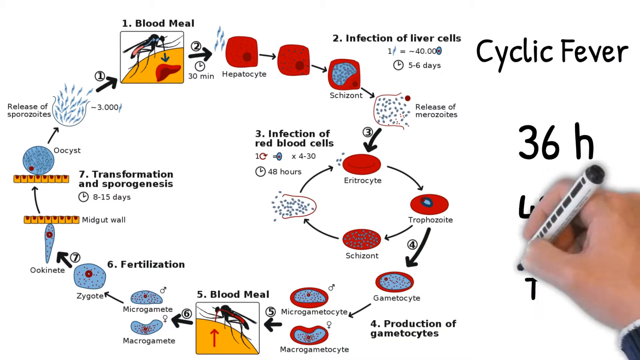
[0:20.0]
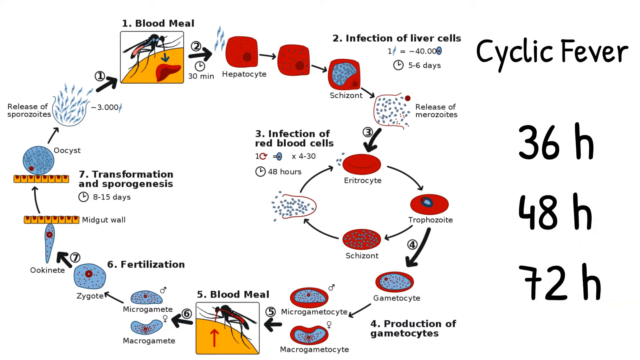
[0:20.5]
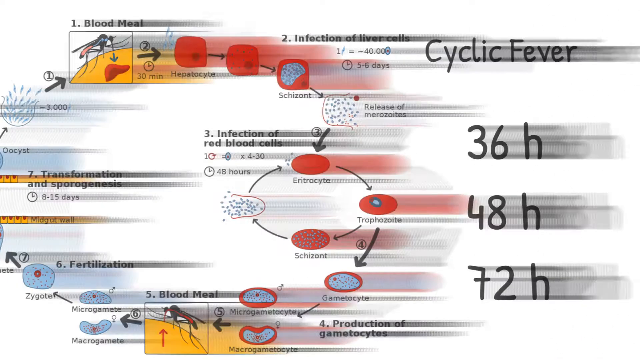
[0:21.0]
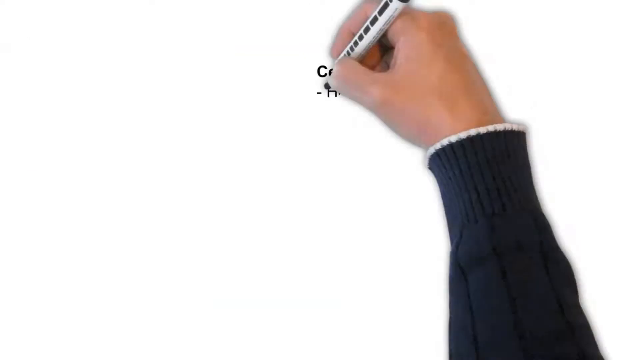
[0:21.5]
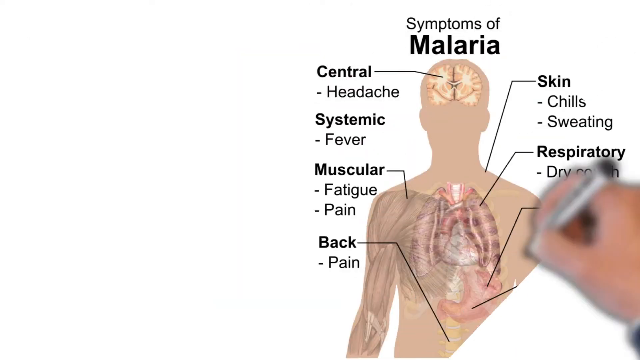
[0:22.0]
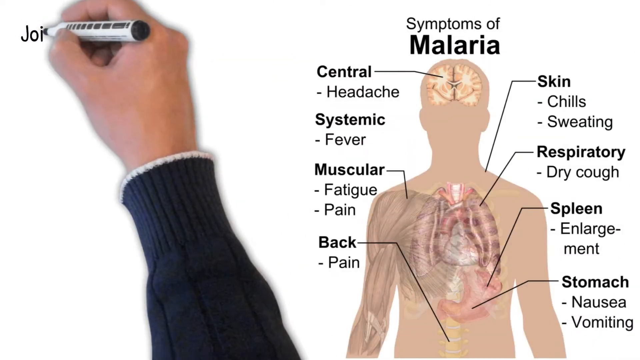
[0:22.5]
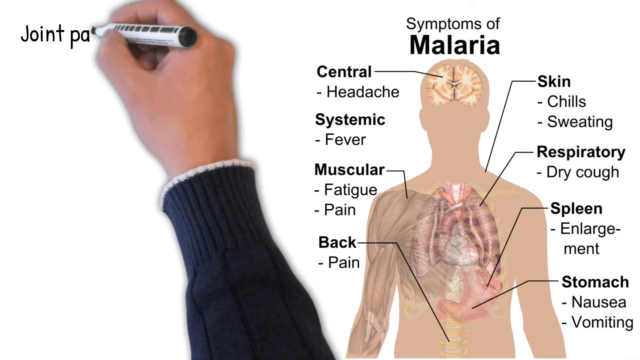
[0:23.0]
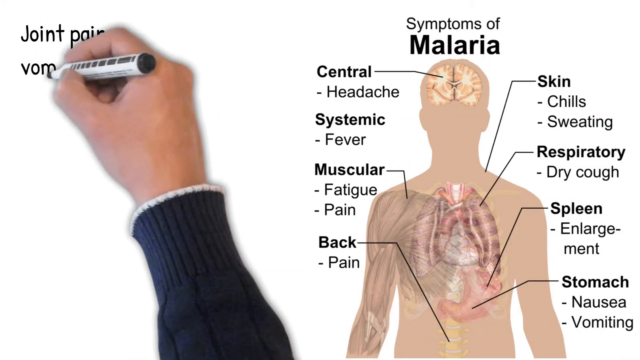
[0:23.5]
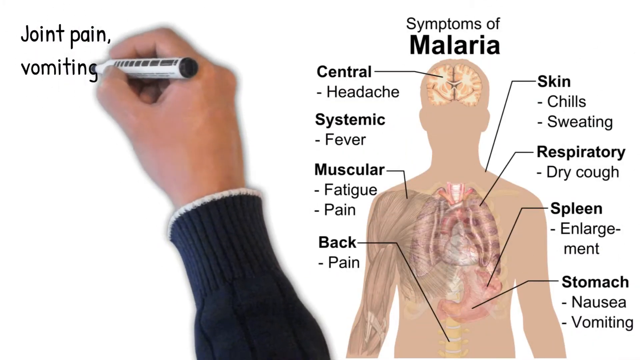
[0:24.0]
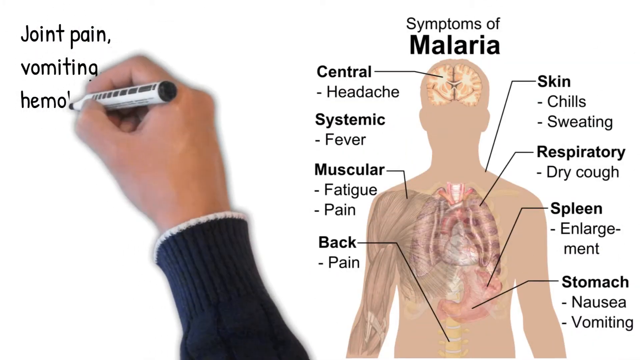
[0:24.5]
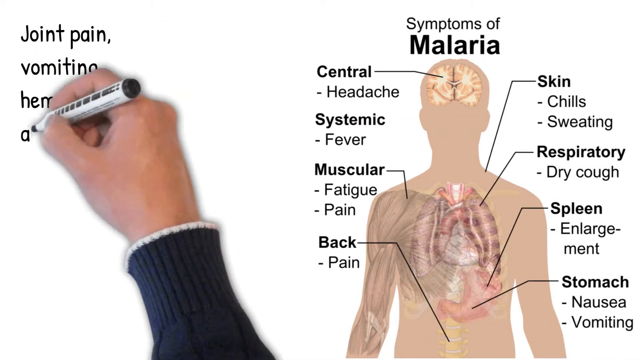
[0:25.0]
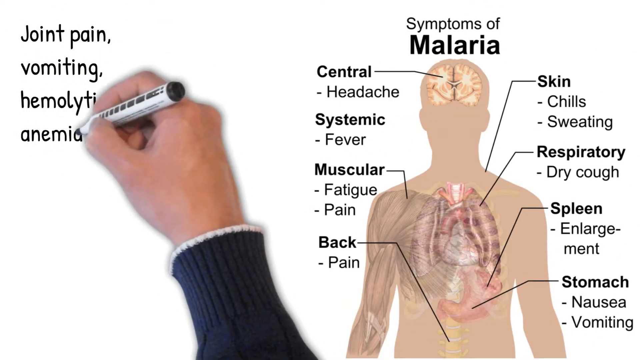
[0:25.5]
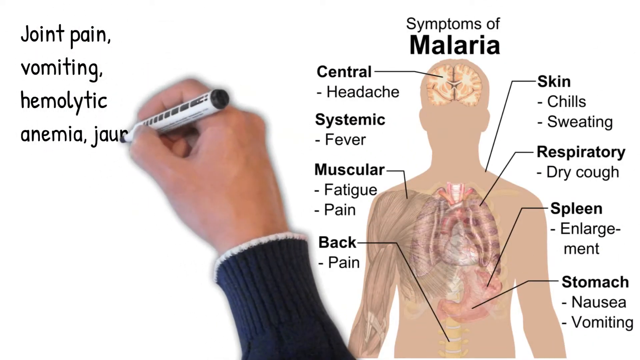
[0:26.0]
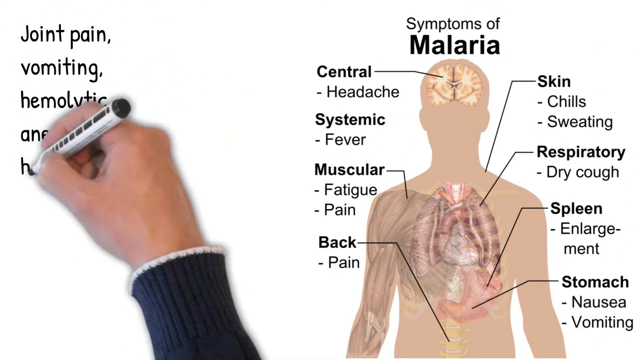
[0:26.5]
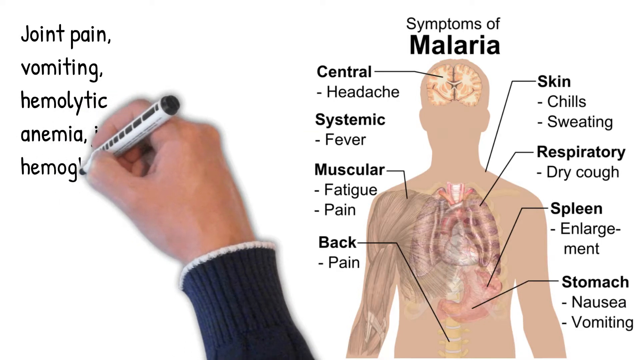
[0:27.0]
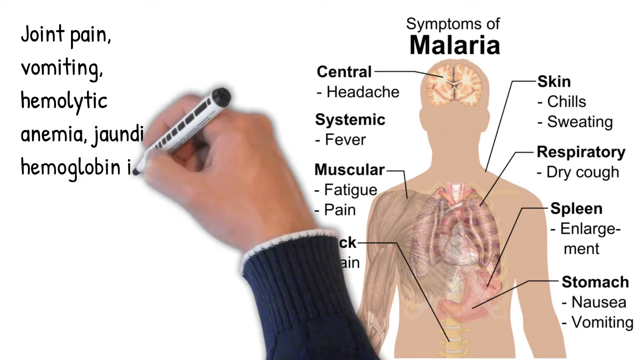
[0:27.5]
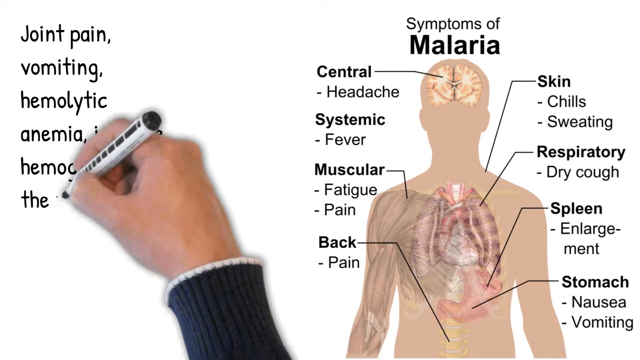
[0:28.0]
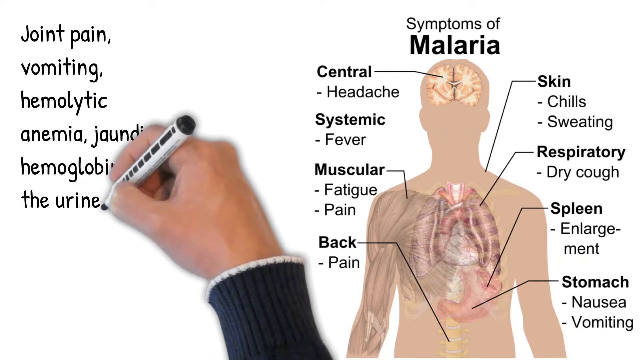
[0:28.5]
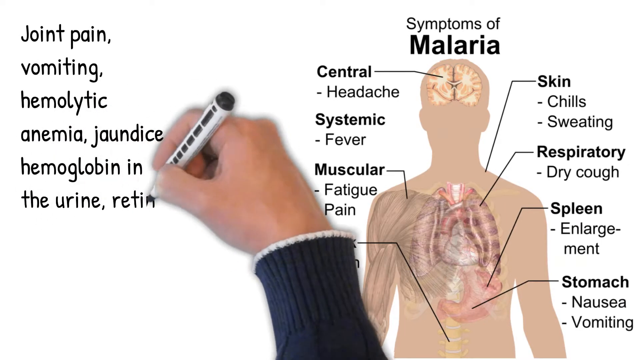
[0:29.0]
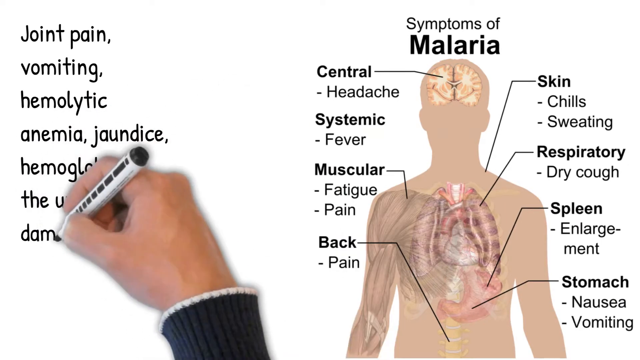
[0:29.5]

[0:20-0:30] The screen shows the start of a whiteboard, with a hand holding a marker pen animated to look as though it is drawing the contents. On the left there is what looks like a life cycle, drawn as a cycle of different images with numbered points: point 1 is "blood meal", and it goes all the way around to number 5, which is also "blood meal". Text on the right reads "cyclic fever, 36 hours, 48 hours, 72 hours". The screen then changes. On the right there is a graphic of a human body with no features, showing some internal organs. The heading above it reads "symptoms of malaria", and arrows point to different areas of the body, each with a tag labeling the symptoms that area may experience; for example, the one pointing to the brain reads "central headache". On the left, text that appears to be written by the hand reads "joint pain, vomiting, hemolytic anemia, jaundice, haemoglobin in the urine, retinal damage".